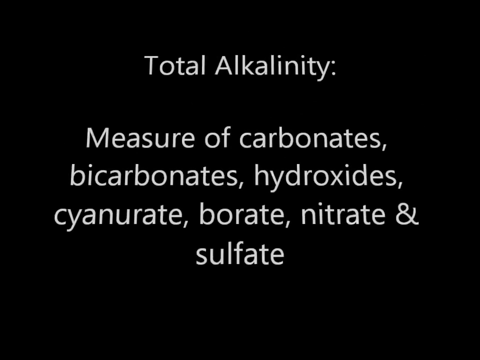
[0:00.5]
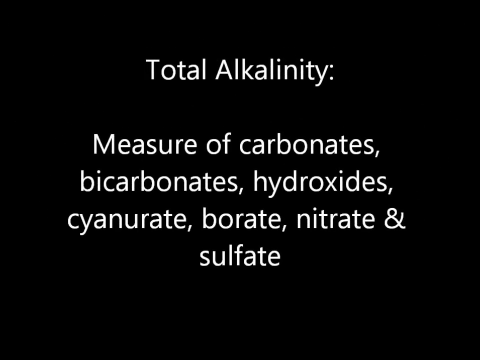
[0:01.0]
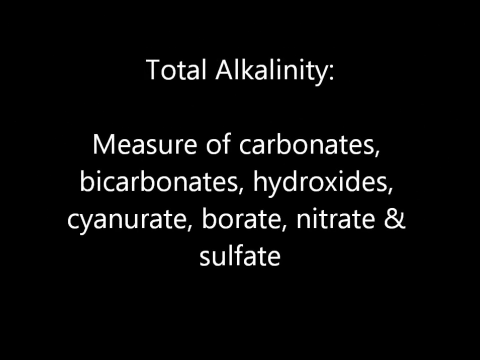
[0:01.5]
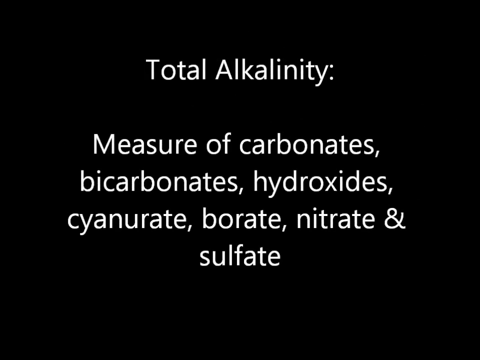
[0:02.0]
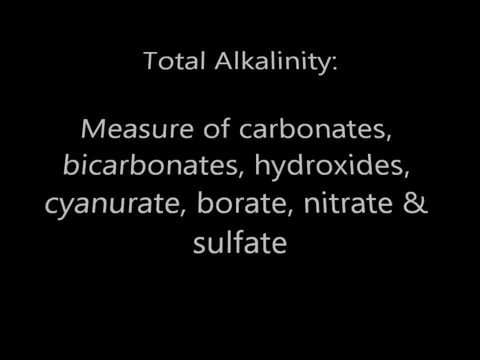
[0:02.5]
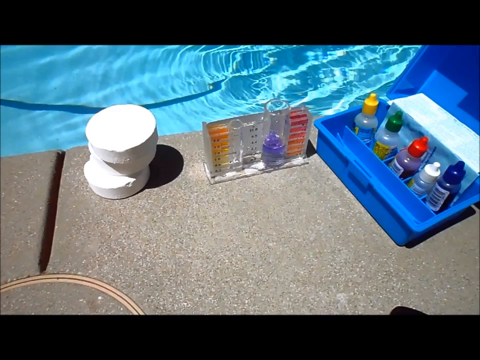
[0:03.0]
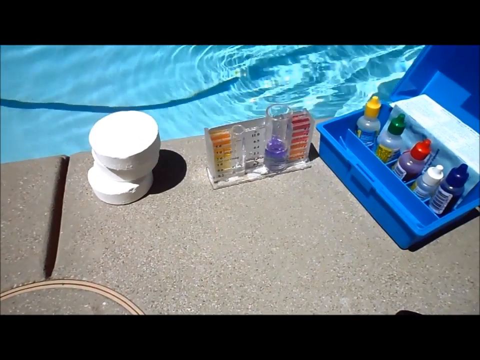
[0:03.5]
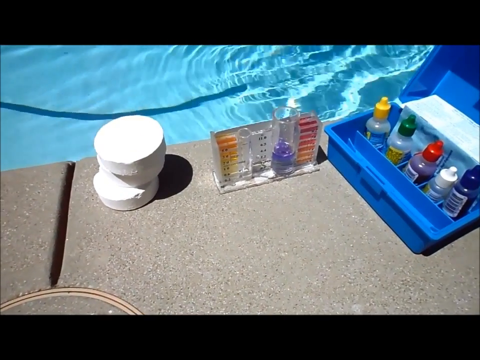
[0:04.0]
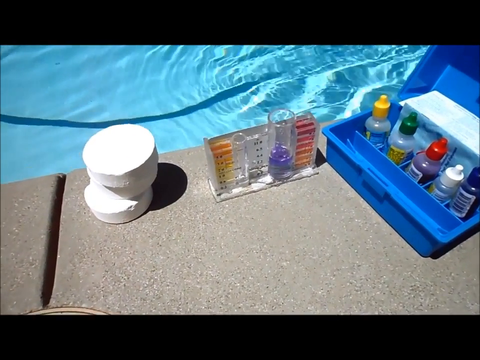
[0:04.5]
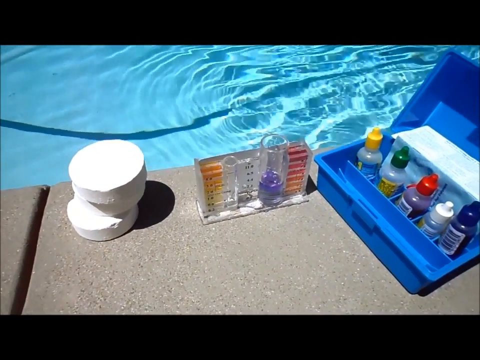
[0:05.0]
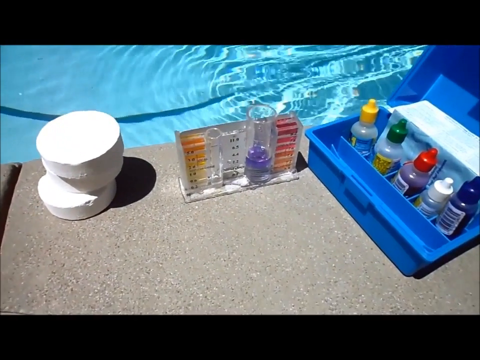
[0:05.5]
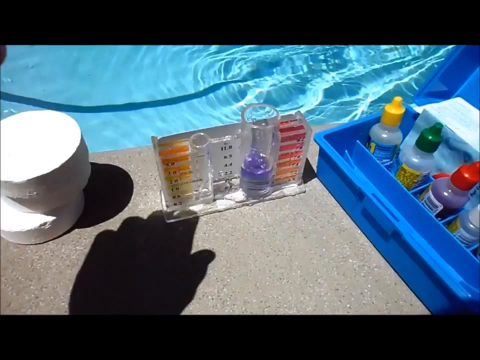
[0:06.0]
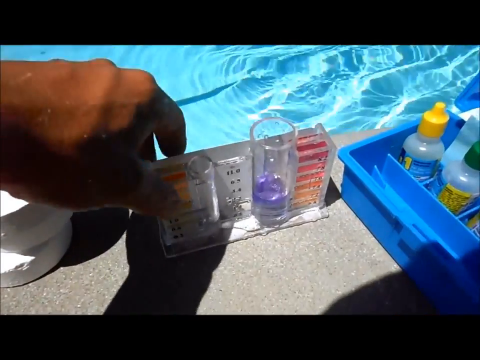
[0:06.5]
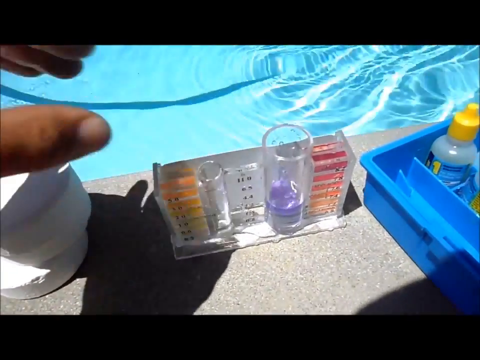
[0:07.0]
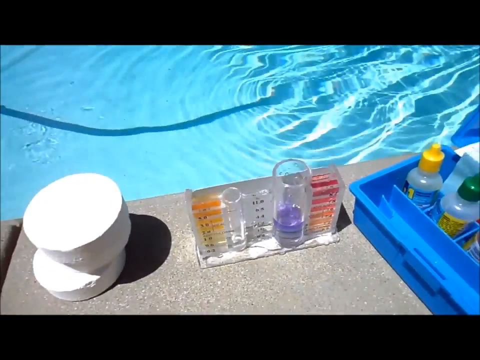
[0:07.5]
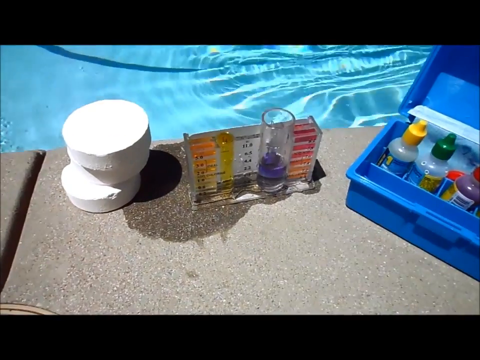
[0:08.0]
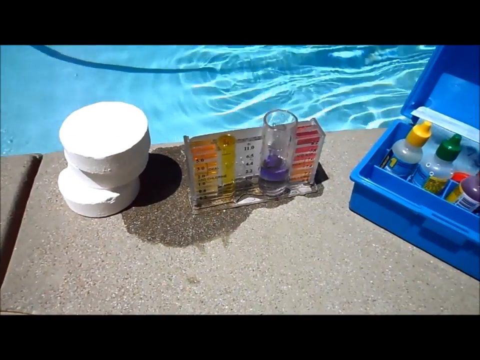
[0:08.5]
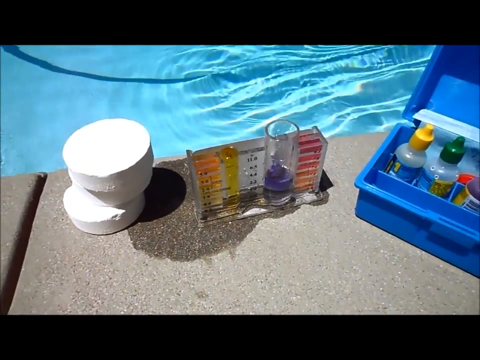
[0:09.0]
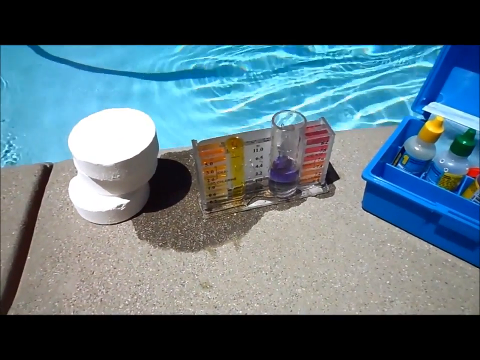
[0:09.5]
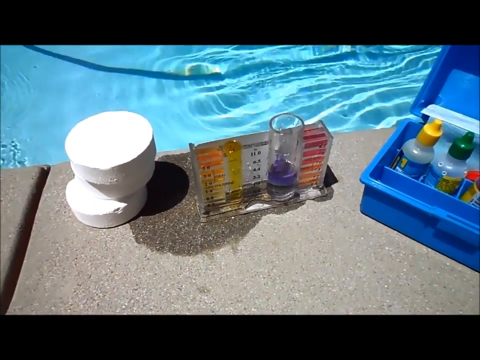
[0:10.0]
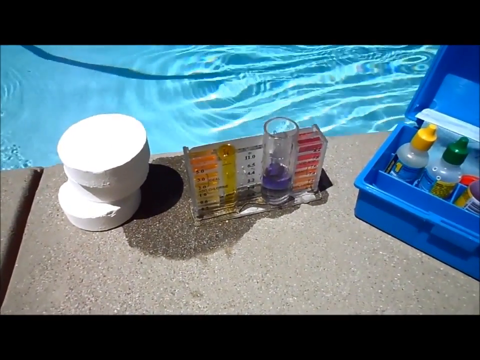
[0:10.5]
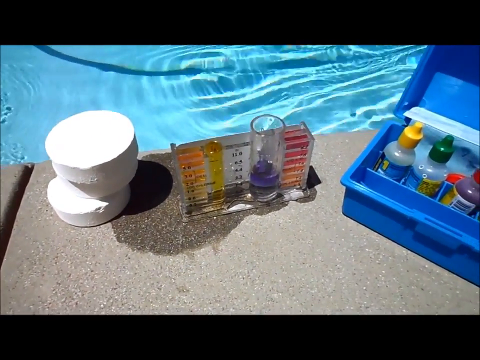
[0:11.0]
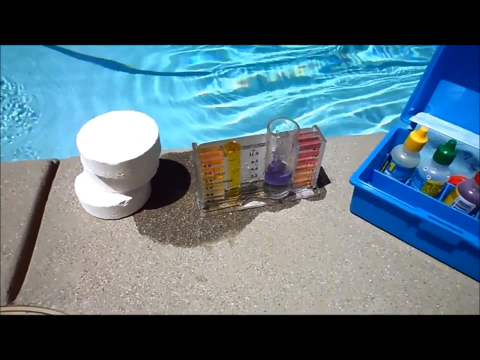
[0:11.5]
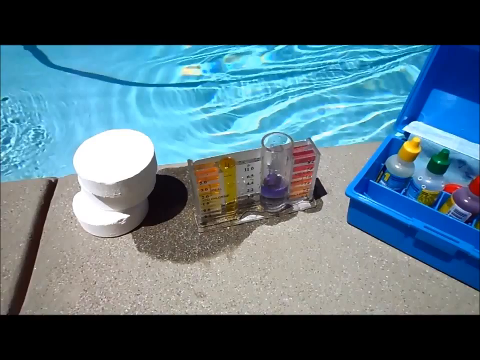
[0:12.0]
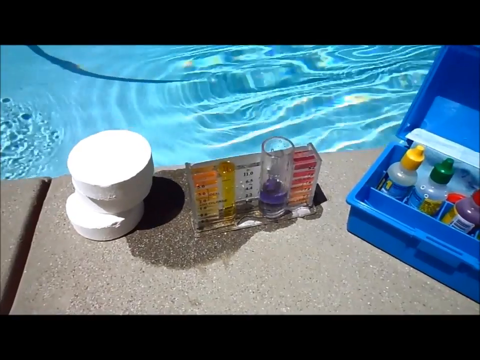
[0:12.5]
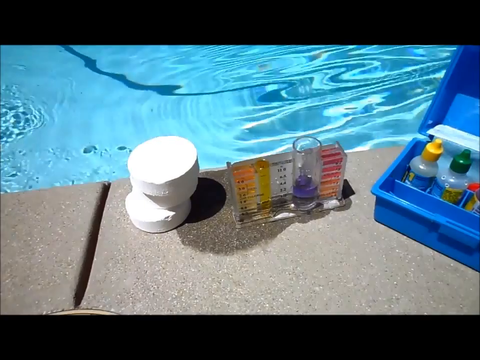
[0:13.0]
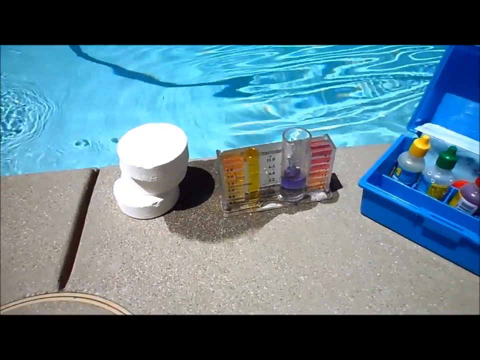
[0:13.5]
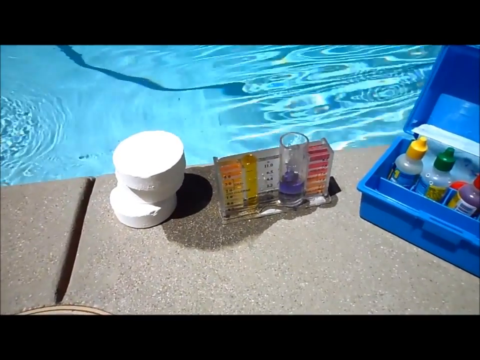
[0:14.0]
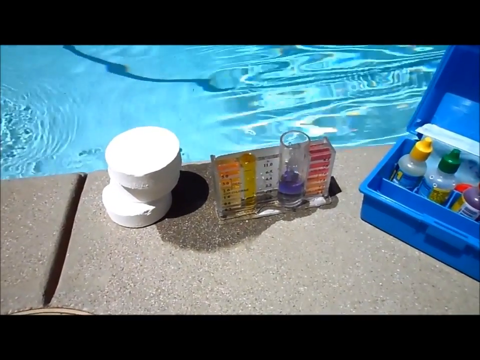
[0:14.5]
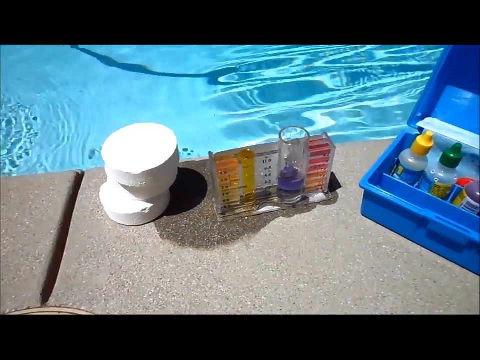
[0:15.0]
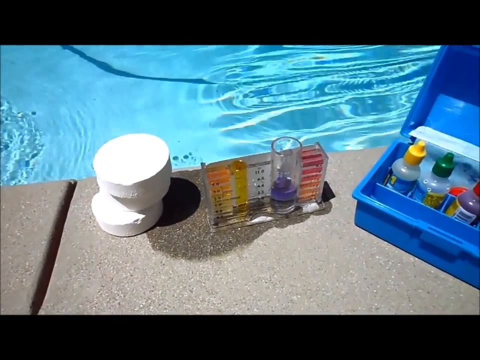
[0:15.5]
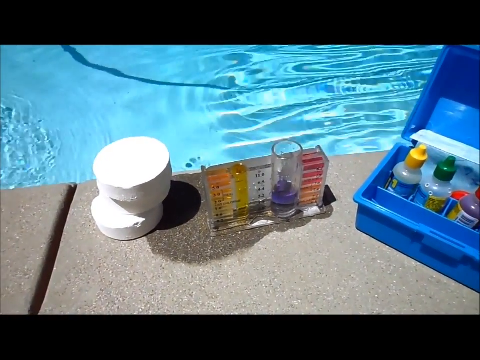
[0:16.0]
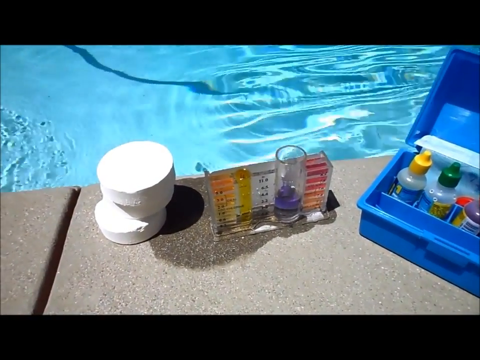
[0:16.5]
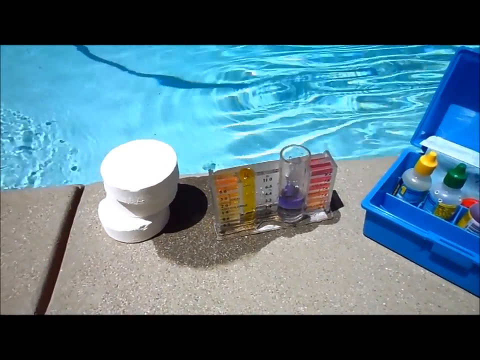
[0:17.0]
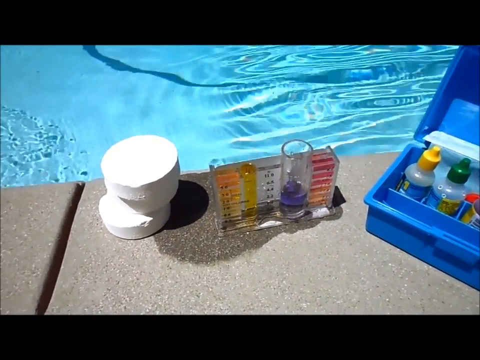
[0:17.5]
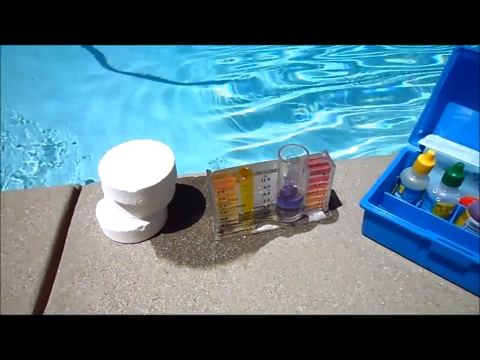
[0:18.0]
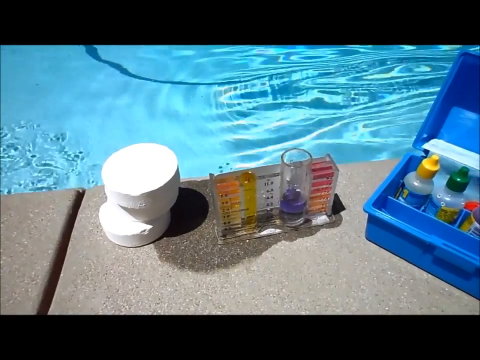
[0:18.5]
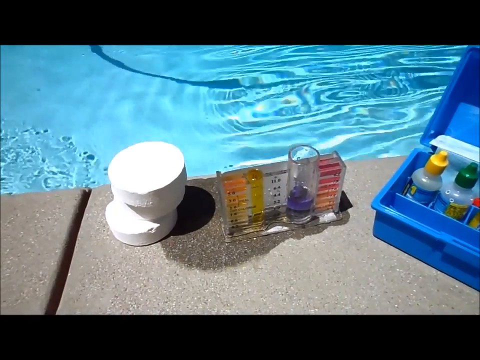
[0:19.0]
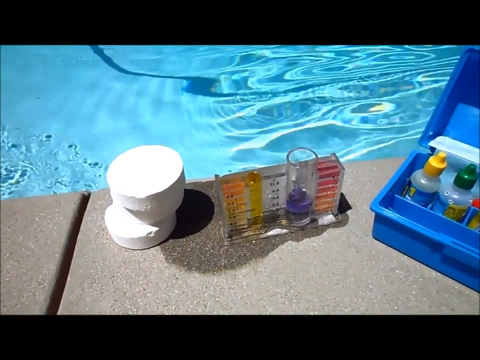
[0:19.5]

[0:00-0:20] The video shows how to put chemicals into what is probably a personal swimming pool, and it looks like it comes from a pool channel. It opens on a black screen with white writing that gives some information about the total alkaline in the water, what is about to go into it, and the measures of the different chemicals that will go into the pool. The scene then shows three different chemicals by the pool side. A man slightly moves the middle one. A little of the pool is visible in the background, and it looks like a sunny day. On the left are what look like two very large chlorine pool tablets, on the right is a blue box with some chemicals, and in the middle is what looks like it could be a chemical reader.